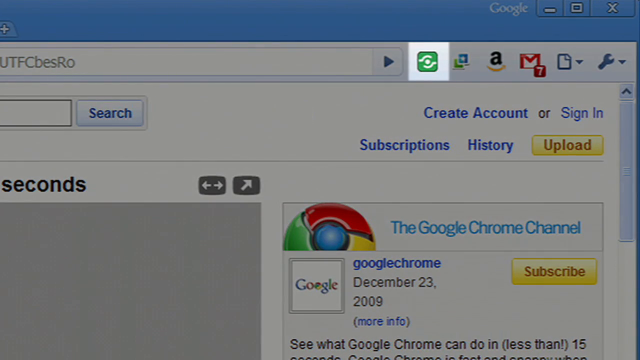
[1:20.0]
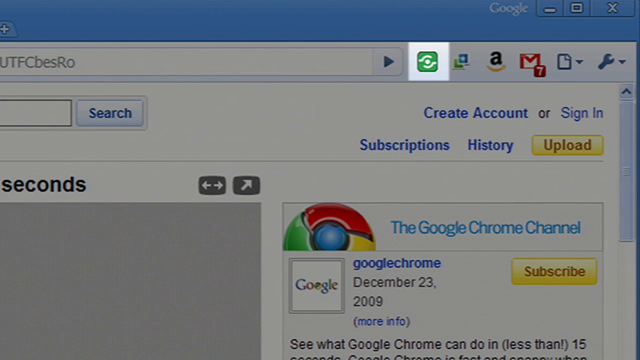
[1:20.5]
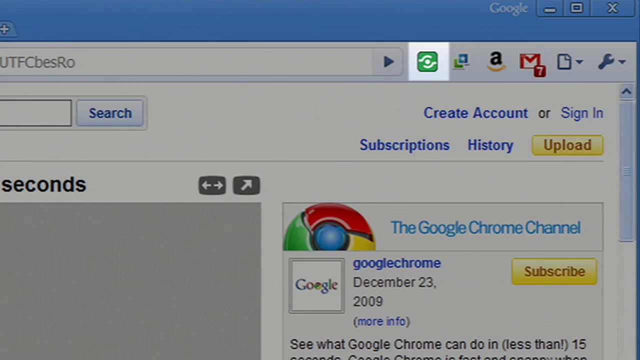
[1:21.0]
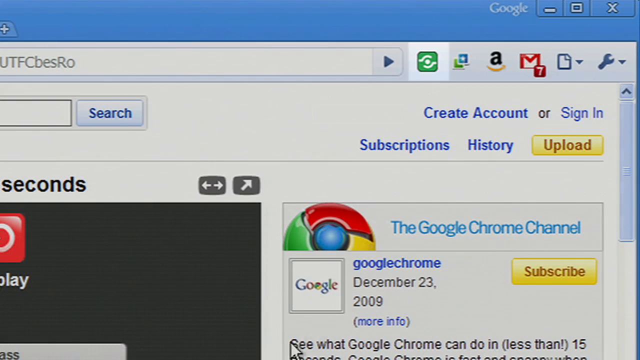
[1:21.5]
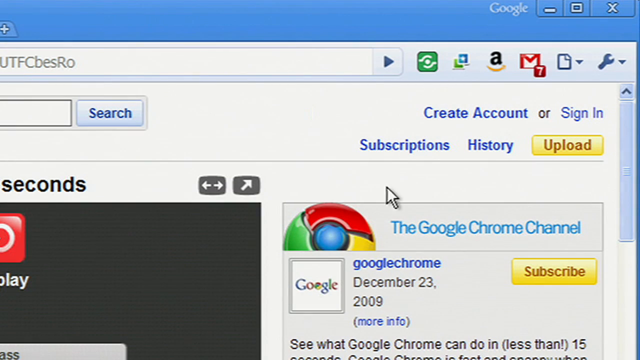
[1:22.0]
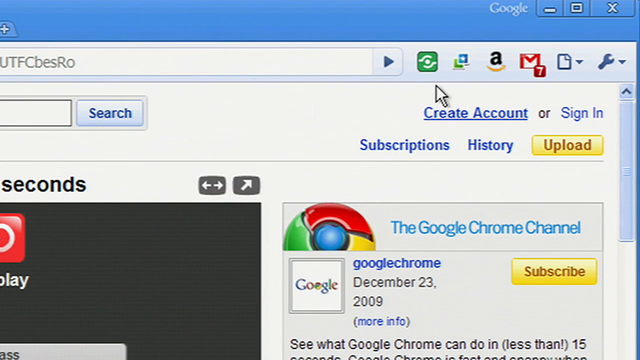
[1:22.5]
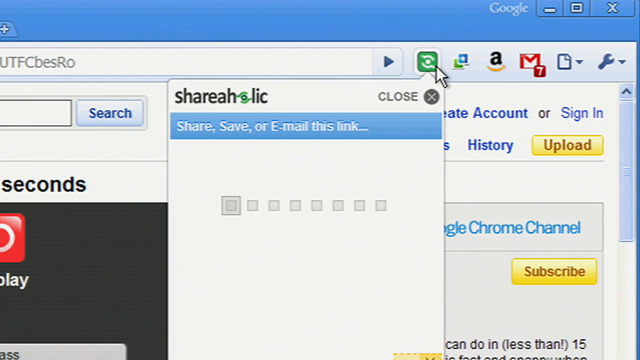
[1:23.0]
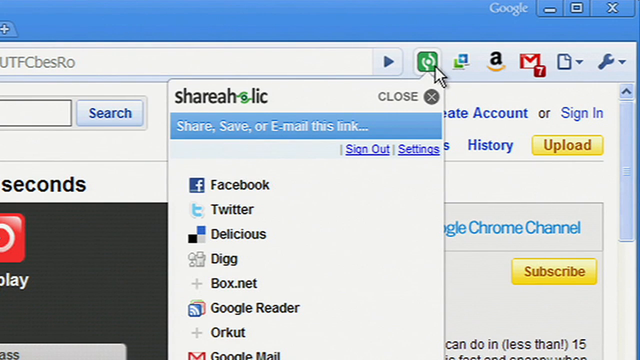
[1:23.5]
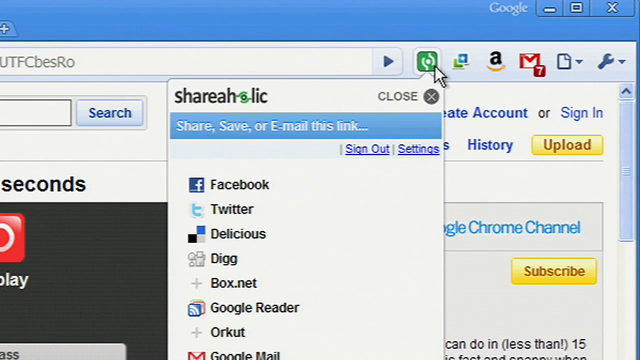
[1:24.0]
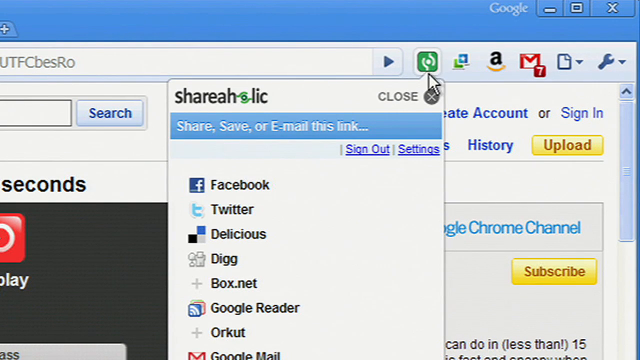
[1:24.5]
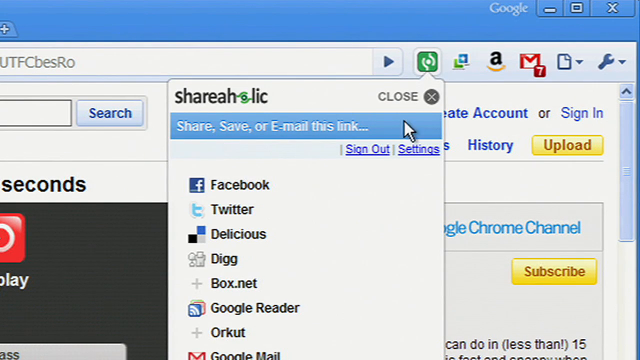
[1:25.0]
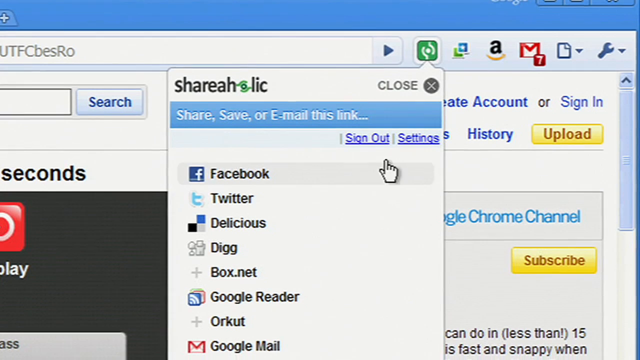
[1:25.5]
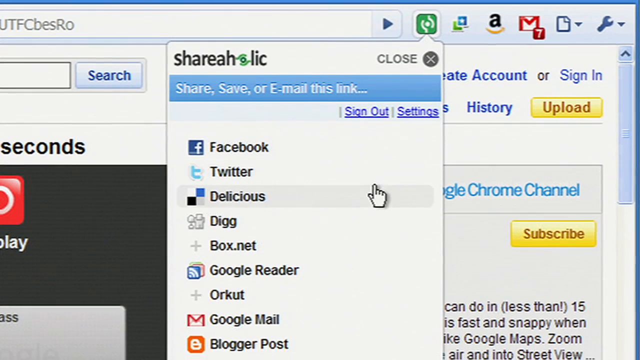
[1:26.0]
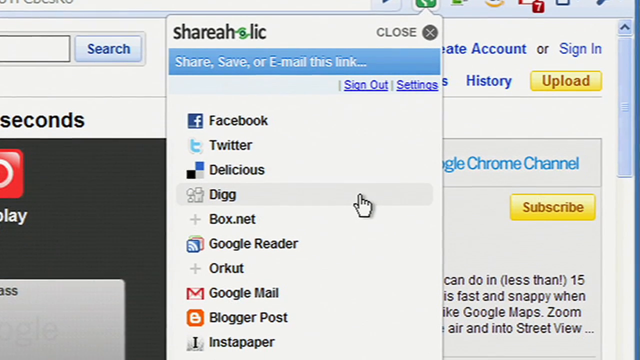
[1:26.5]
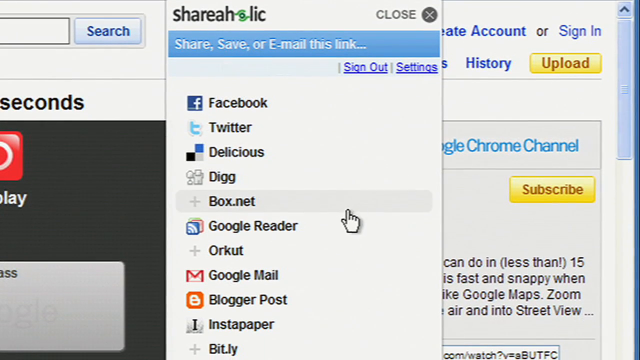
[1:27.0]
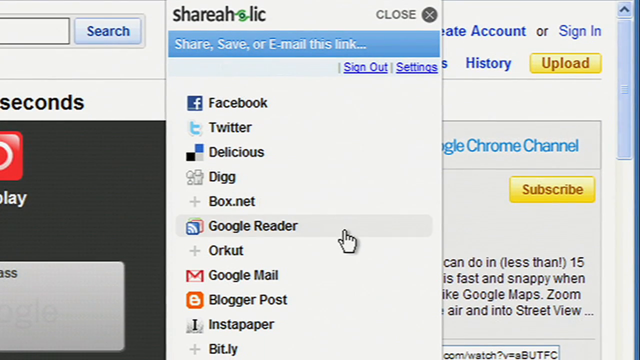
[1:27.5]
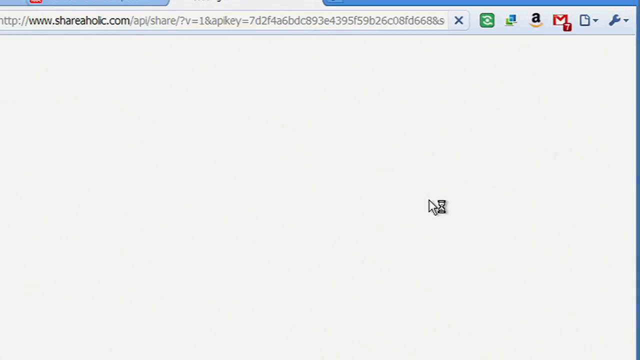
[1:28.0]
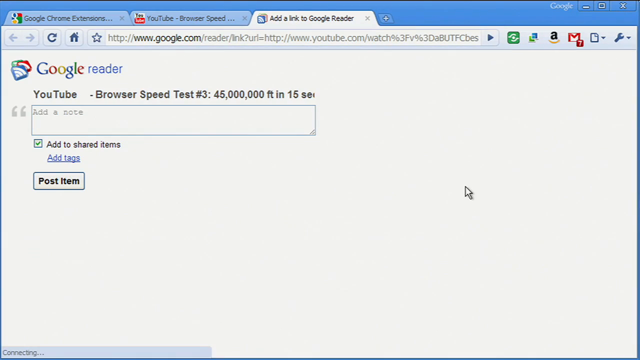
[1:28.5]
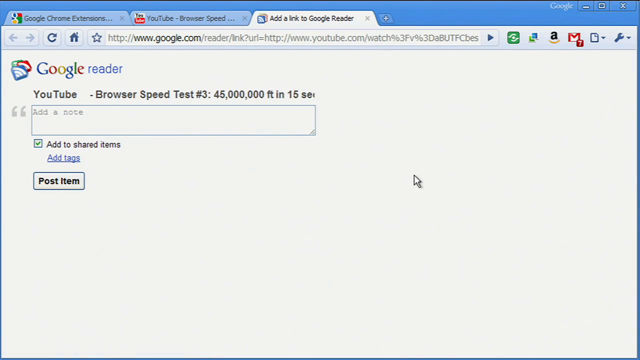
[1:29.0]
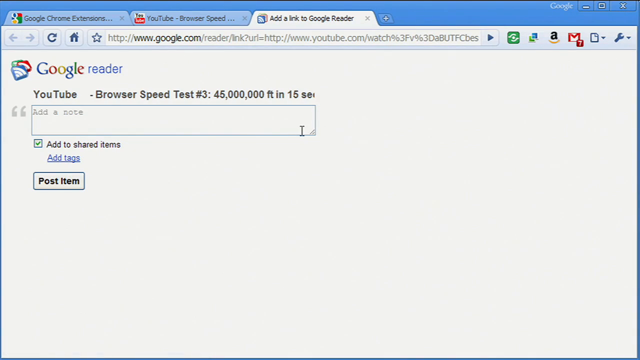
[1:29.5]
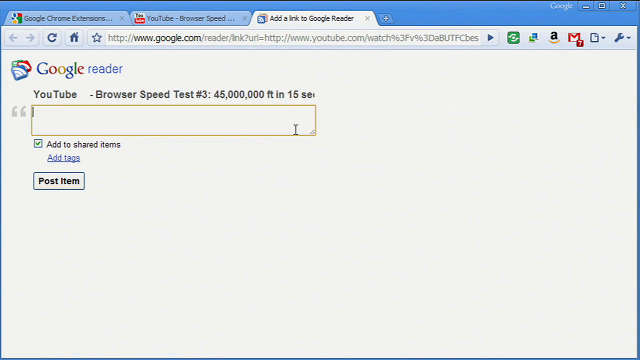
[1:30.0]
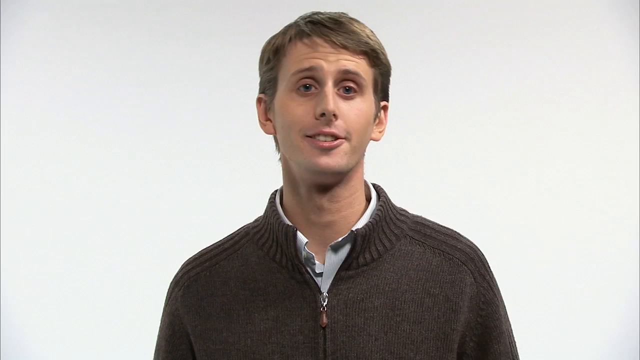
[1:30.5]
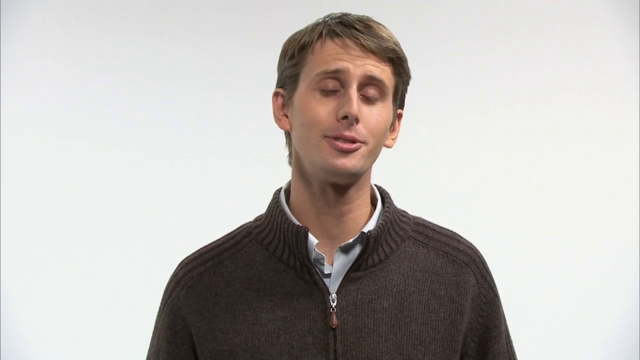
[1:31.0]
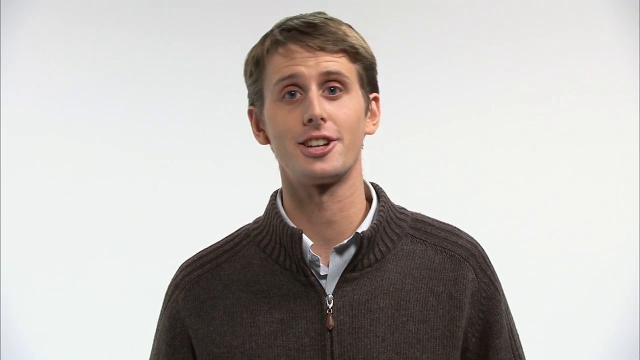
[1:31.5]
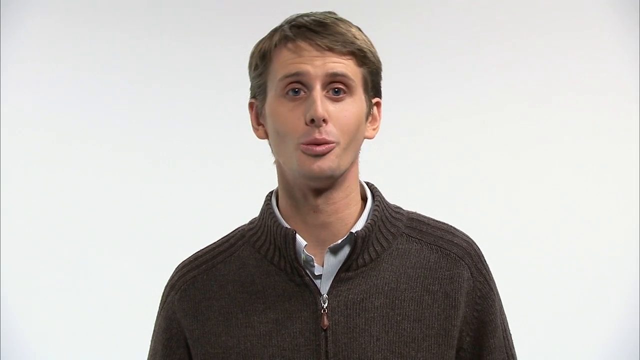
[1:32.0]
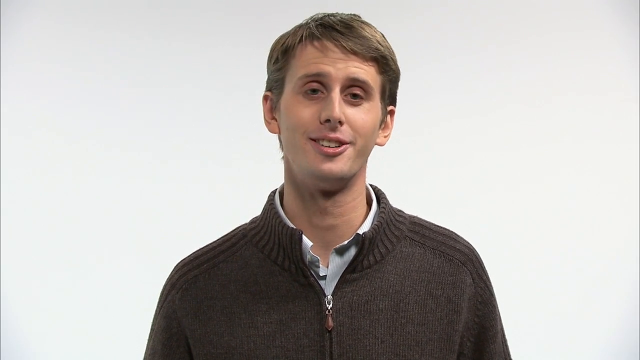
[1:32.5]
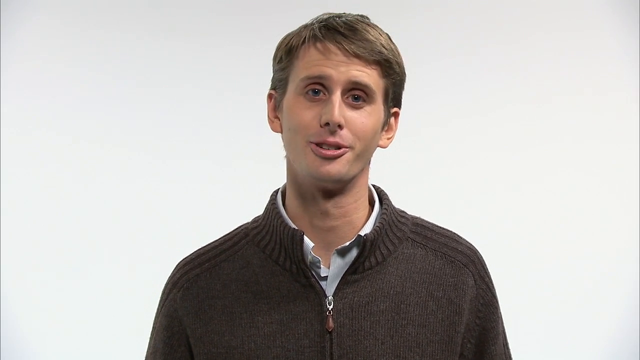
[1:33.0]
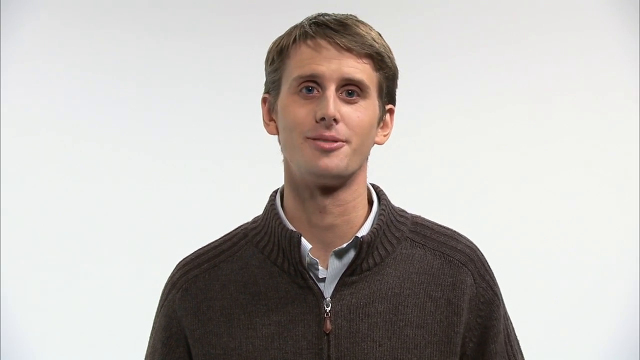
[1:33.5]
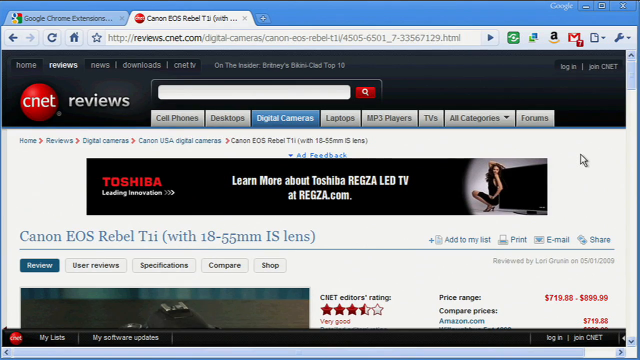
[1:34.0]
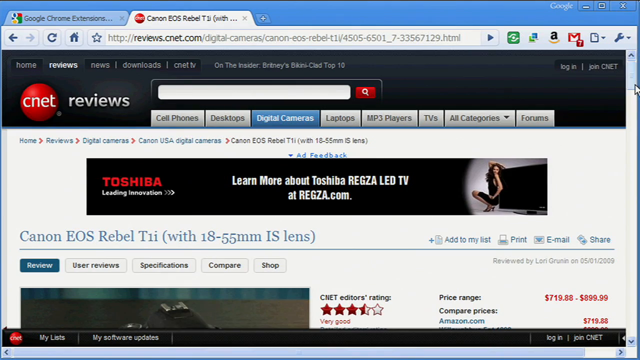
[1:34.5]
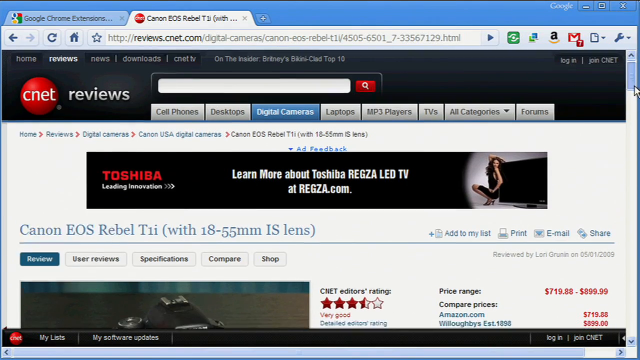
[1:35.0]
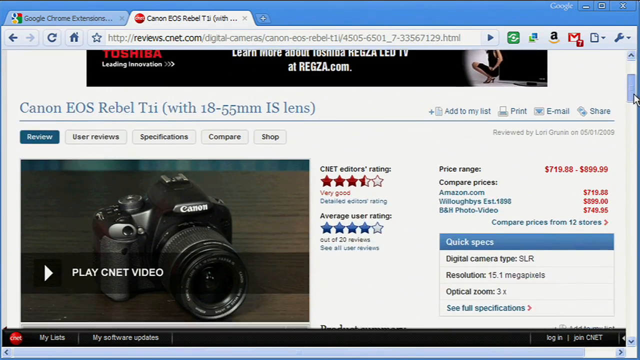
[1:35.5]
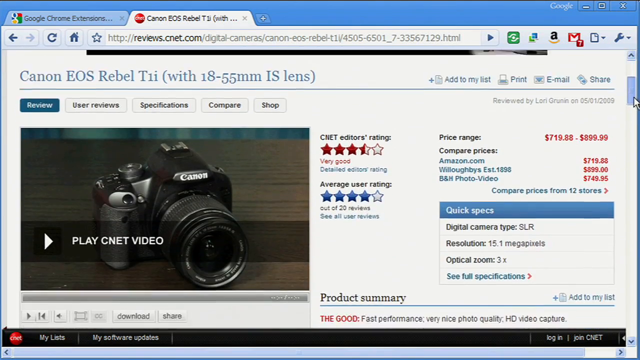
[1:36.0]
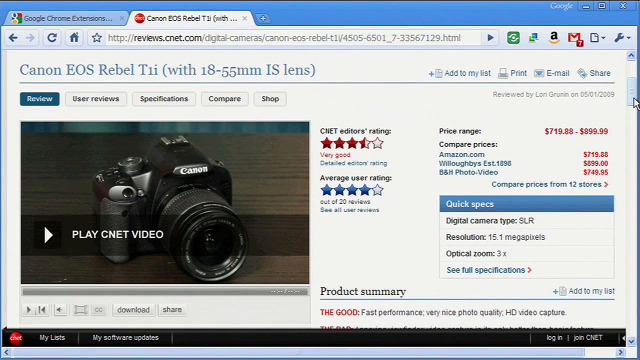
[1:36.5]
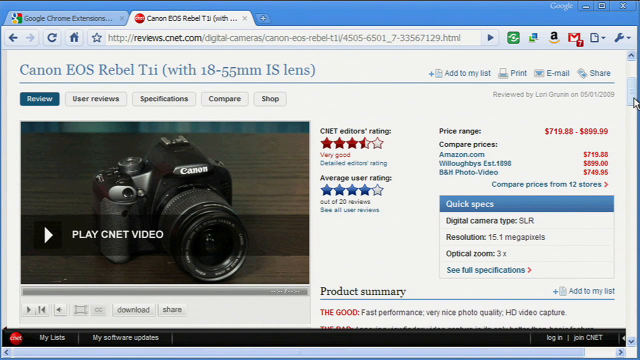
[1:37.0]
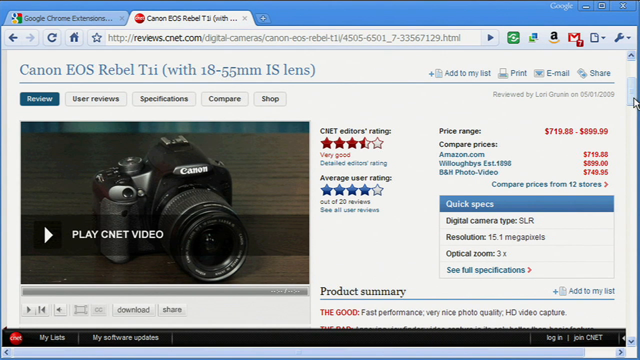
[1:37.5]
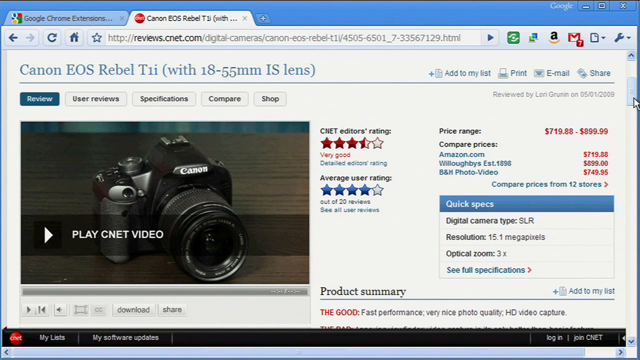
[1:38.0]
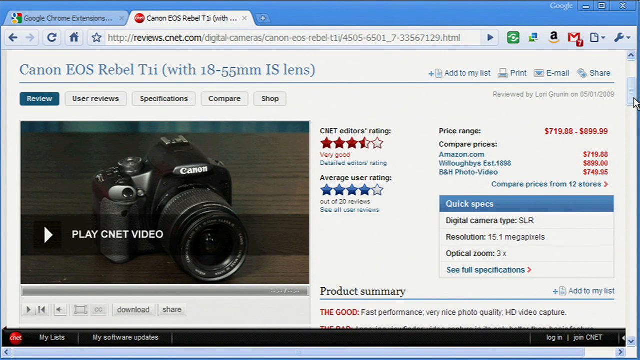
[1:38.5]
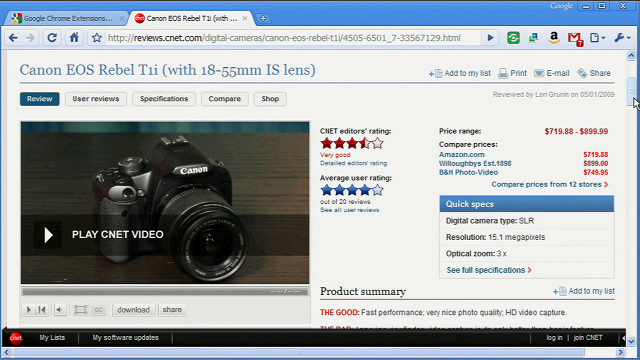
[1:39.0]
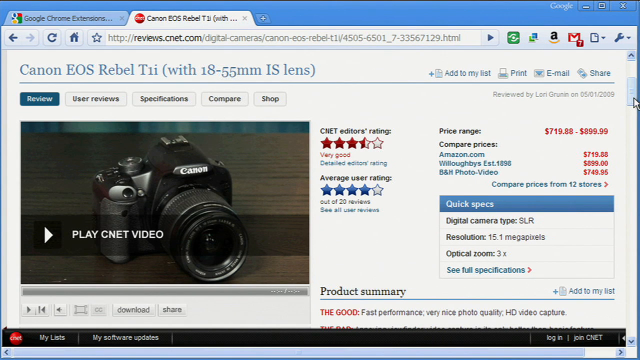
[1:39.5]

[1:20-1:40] A zoomed-in view shows an icon on a web browser page that looks like some sort of camera icon, with an Amazon icon and a mail icon next to it. That icon is highlighted while the rest of the screen is kind of blacked out. The blacking out and highlighting fade, and the screen returns to regular colors. A mouse cursor moves up to the highlighted icon, and a box appears with a circle in the upper right corner that says "Close" and a bar that says "share, save, or email this link." As the person clicks it, the extension animates and a little white part in it turns. Below the bar, many icons appear: Facebook, Twitter, Delicious, Dig, Box.net, and Google Reader. The cursor moves down to Google Reader and clicks it, opening a page that says "Google Reader" with a box on the left side that can be written in; at the very top of the box it says "YouTube Browser Speed Test Number 3, 45 million feet in 15 seconds." The person clicks inside the box, and the video goes to a man speaking to the camera. It quickly changes to a website from CNET Reviews that says "Canon EOS Rebel" at the very top. The person clicks the scroll bar on the right side and scrolls down to an image of the Canon EOS Rebel T1i with 18 to 55 millimeter IS lens, staying there for a moment.